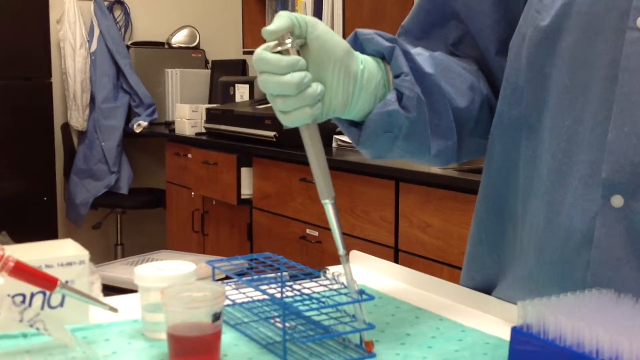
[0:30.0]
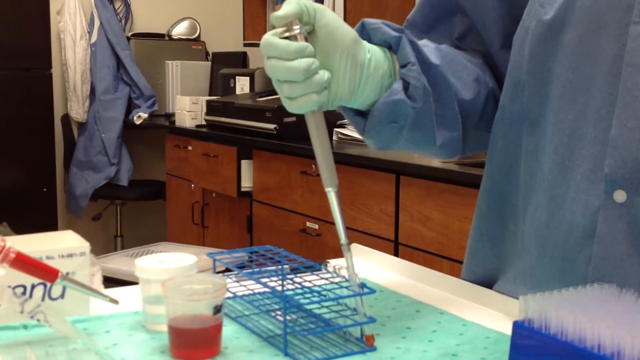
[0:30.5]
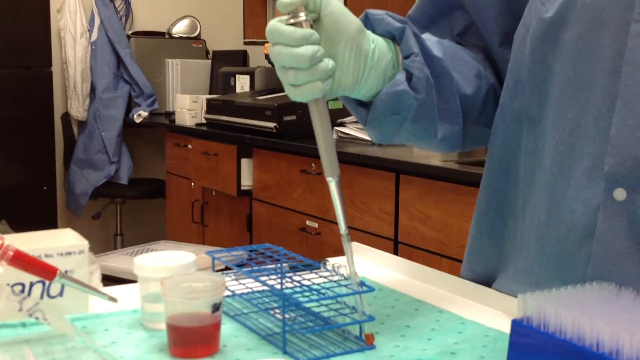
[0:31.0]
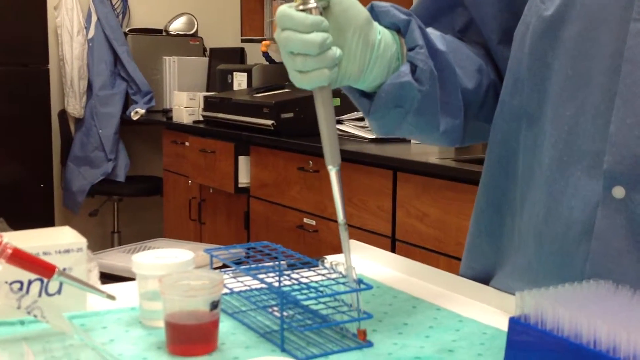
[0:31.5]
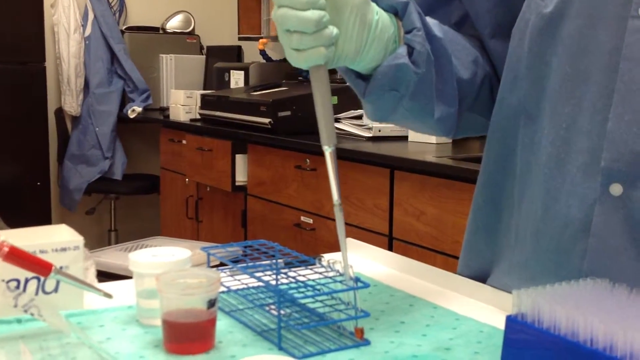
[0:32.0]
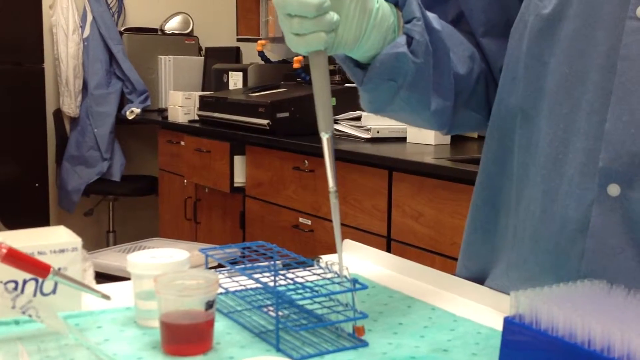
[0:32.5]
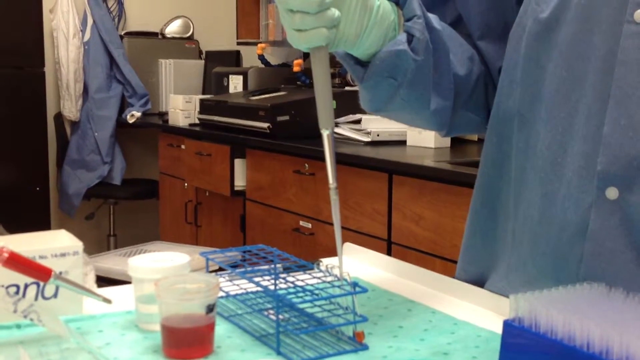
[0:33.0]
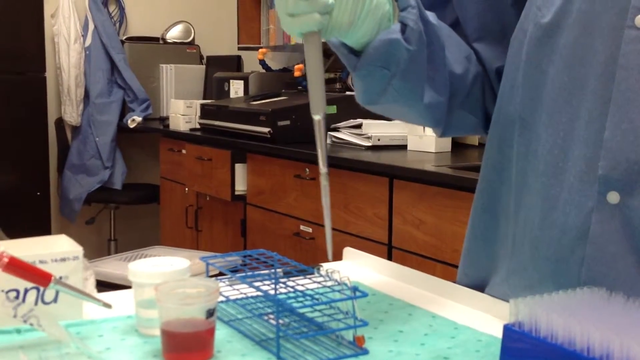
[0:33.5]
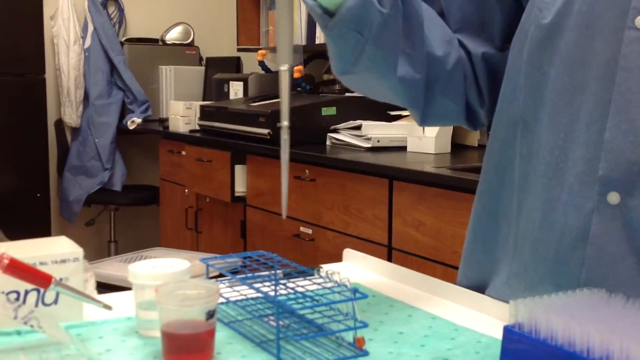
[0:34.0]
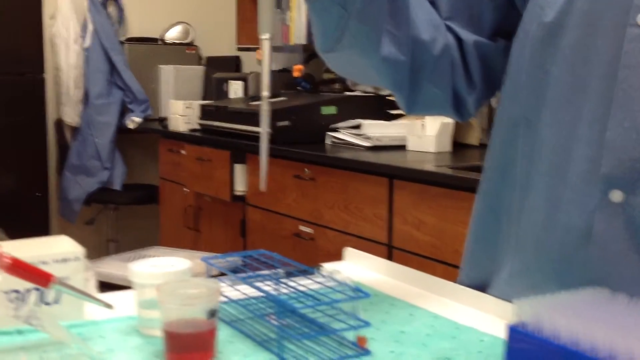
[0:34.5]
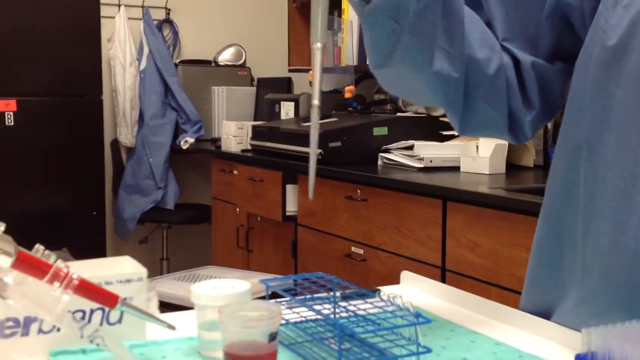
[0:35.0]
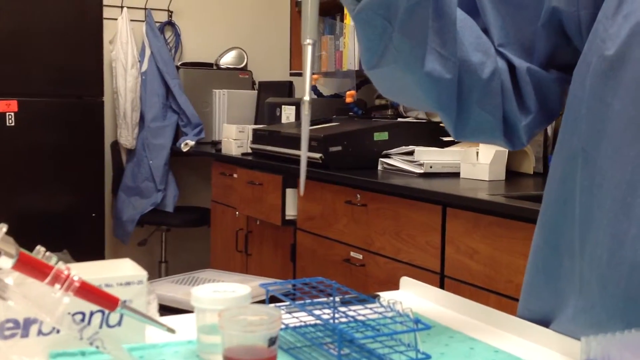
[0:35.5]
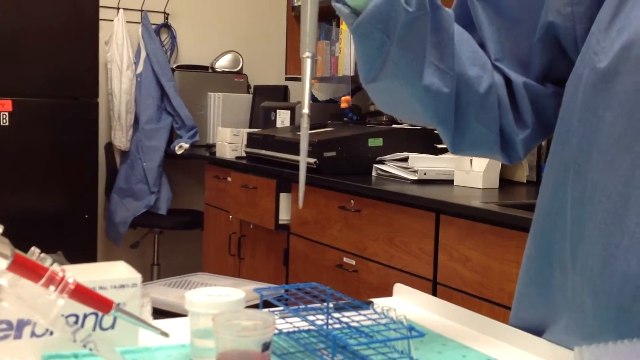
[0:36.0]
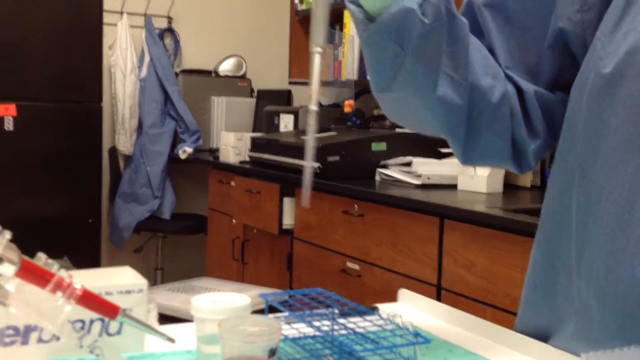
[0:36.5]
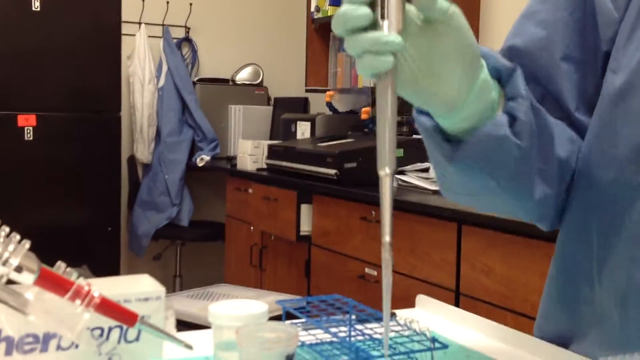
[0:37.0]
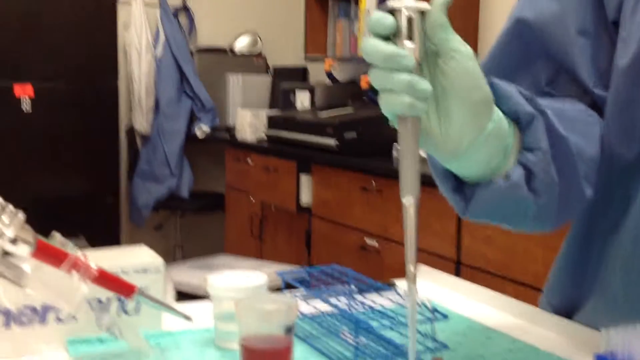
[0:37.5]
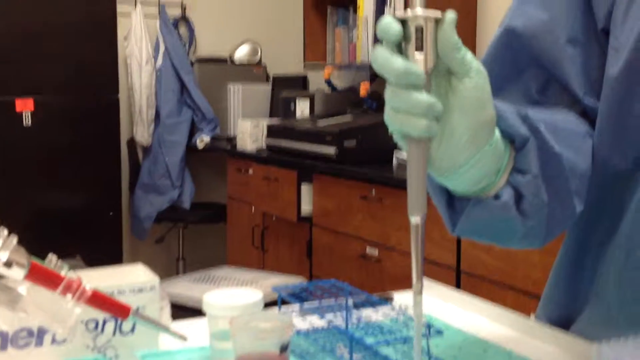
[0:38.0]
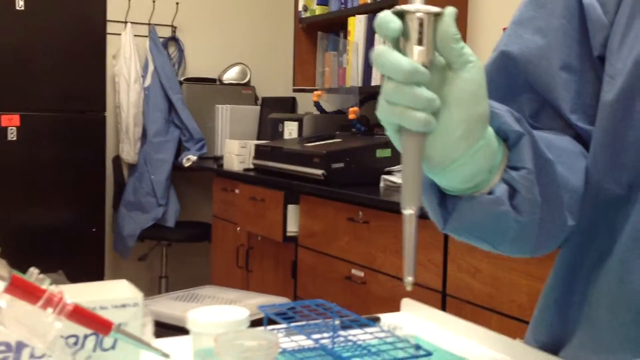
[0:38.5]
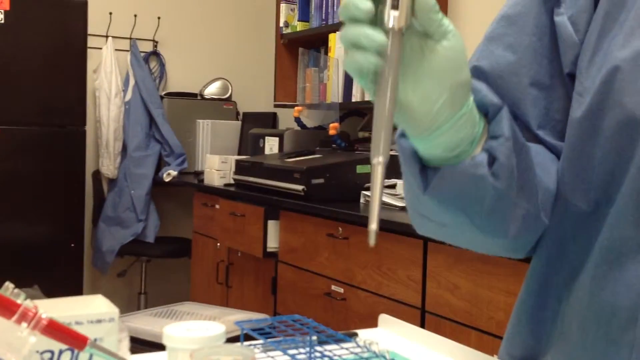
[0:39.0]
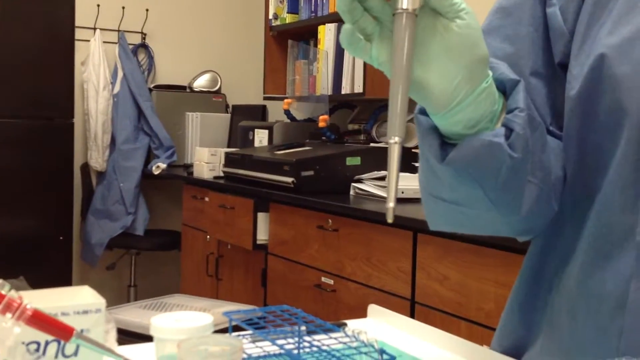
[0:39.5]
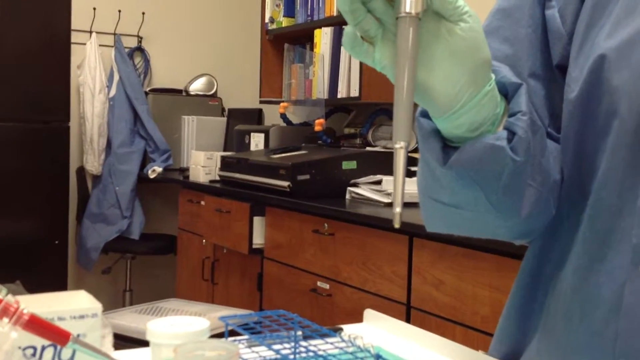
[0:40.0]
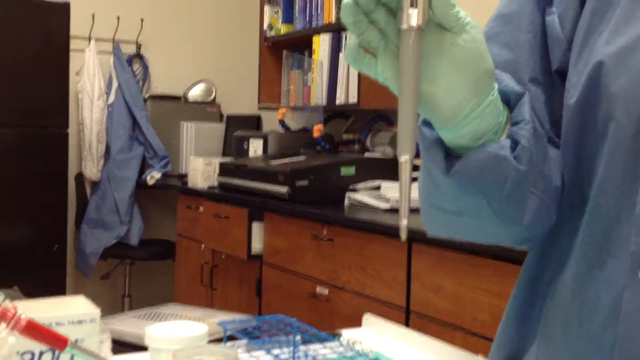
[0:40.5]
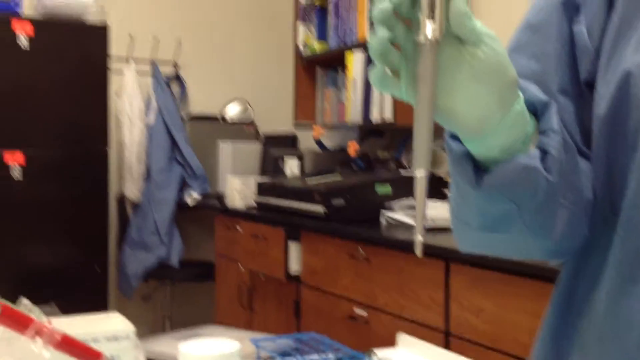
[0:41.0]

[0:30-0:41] A person's gloved hand holds an injection medical instrument; the person is dressed in a blue surgical gown. They are standing in a room with drawers and cabinets, with other surgical gear hanging on the back wall. In front of the person is a table with trays, test tubes and a couple of bottles, and the person is injecting liquid into the test tubes held in the tray. The person's face is not shown. The hand moves continuously up and down, using the medical instrument to inject liquid.